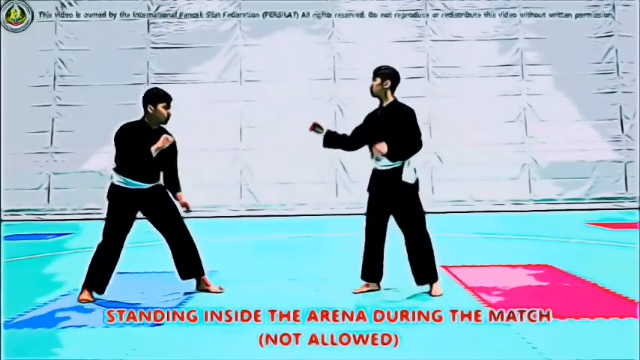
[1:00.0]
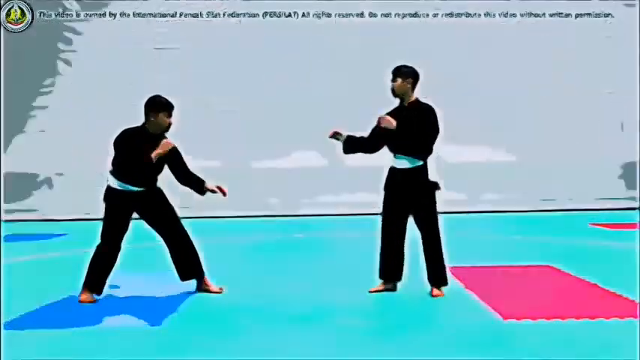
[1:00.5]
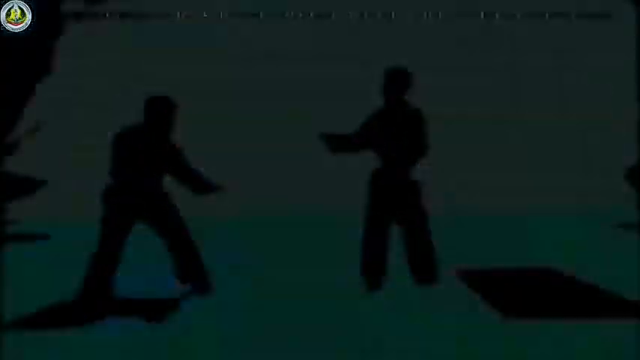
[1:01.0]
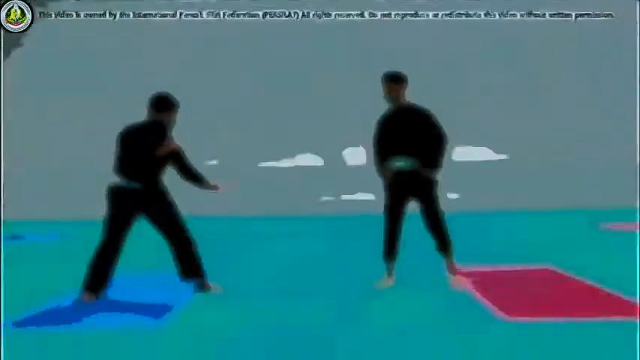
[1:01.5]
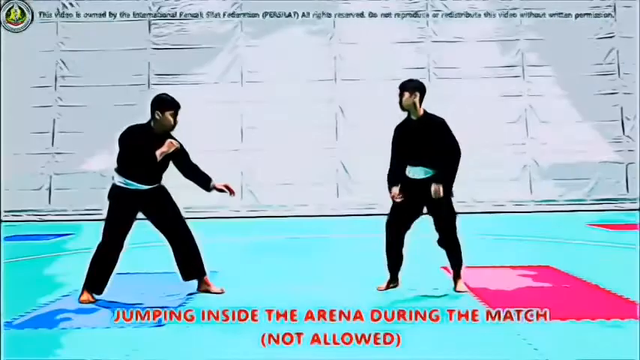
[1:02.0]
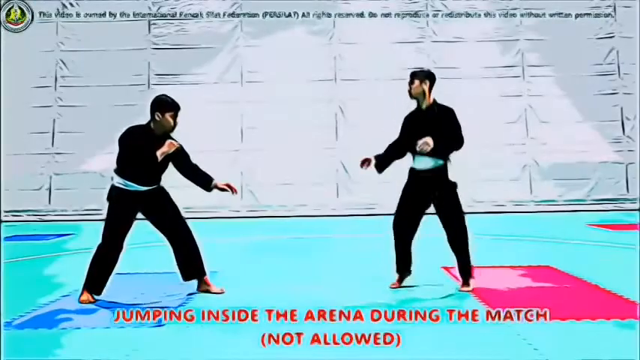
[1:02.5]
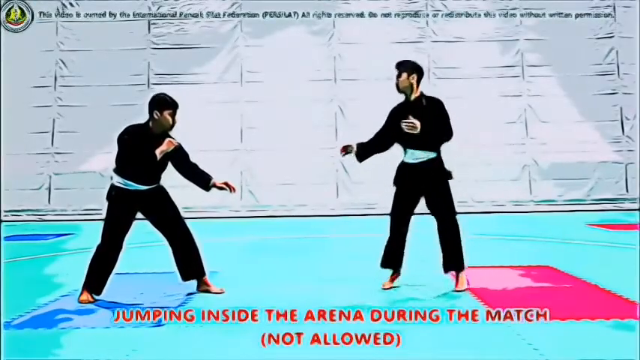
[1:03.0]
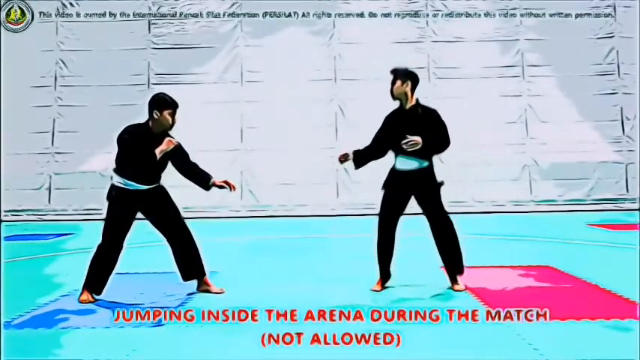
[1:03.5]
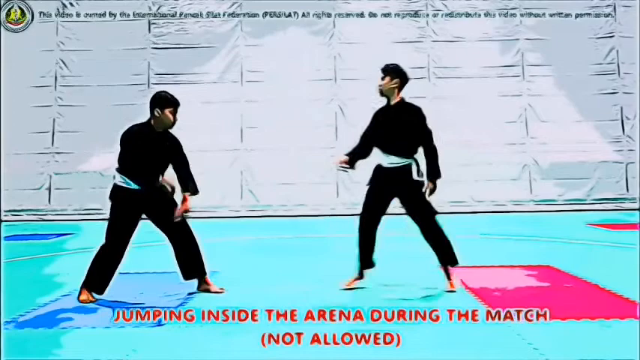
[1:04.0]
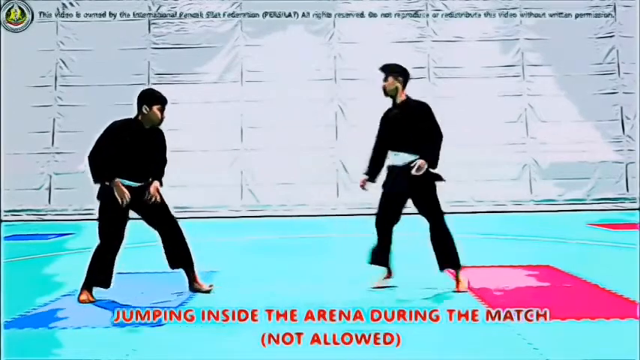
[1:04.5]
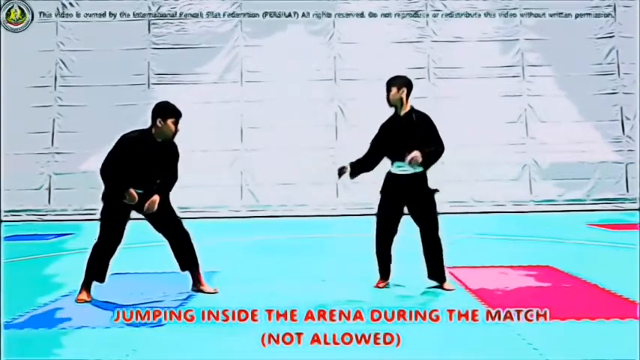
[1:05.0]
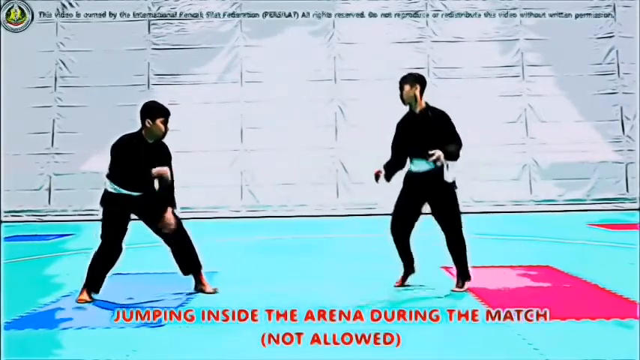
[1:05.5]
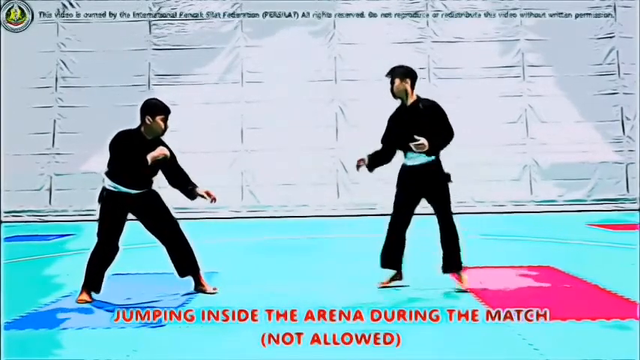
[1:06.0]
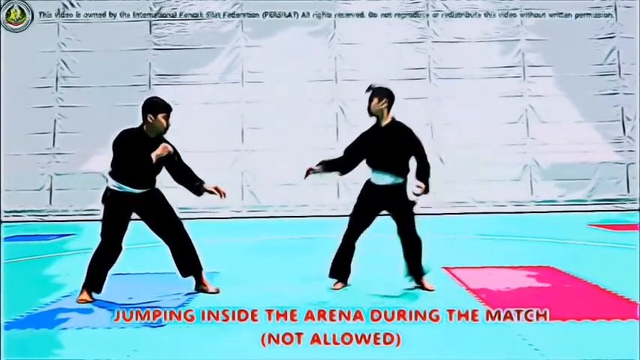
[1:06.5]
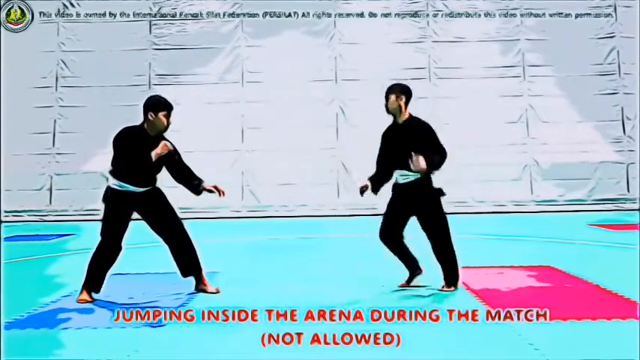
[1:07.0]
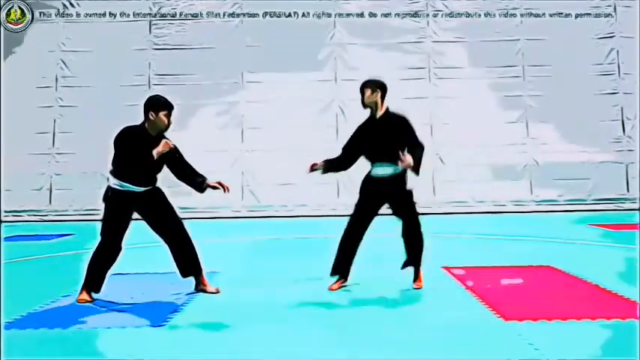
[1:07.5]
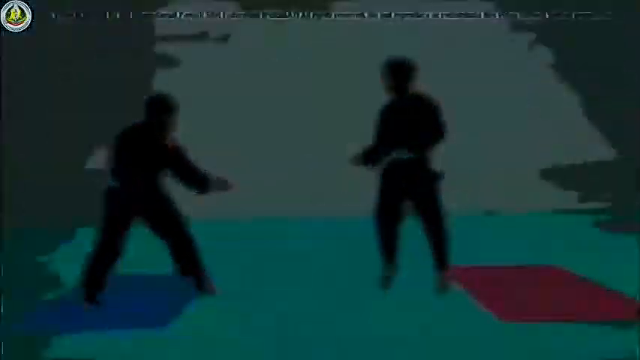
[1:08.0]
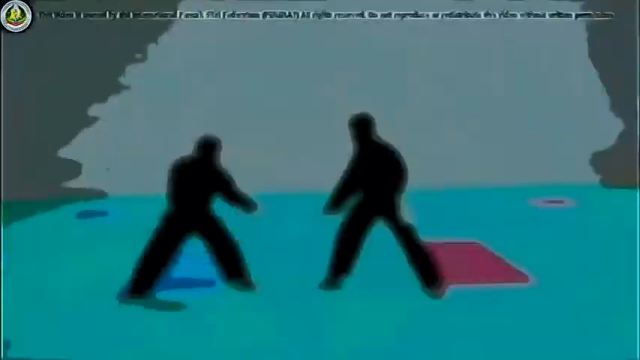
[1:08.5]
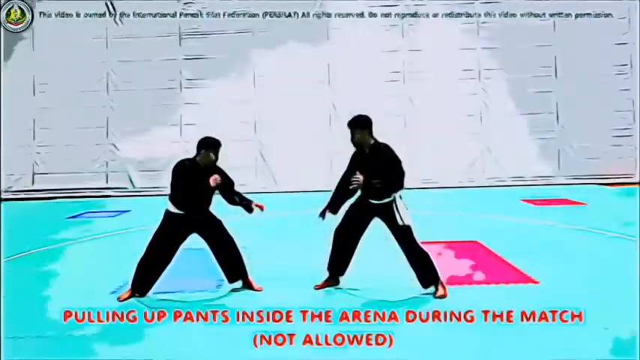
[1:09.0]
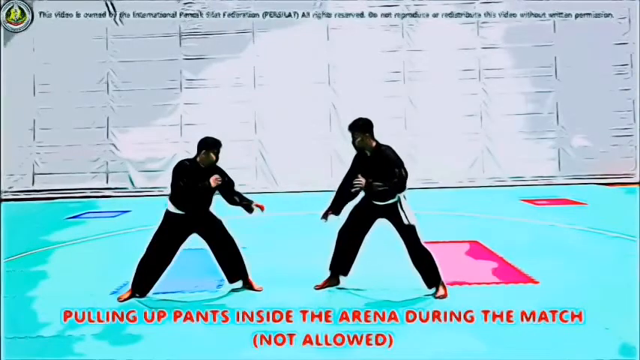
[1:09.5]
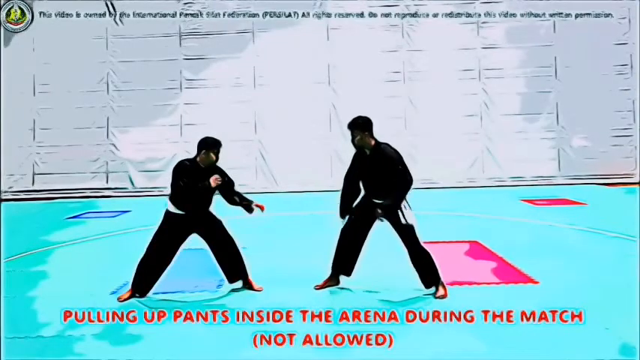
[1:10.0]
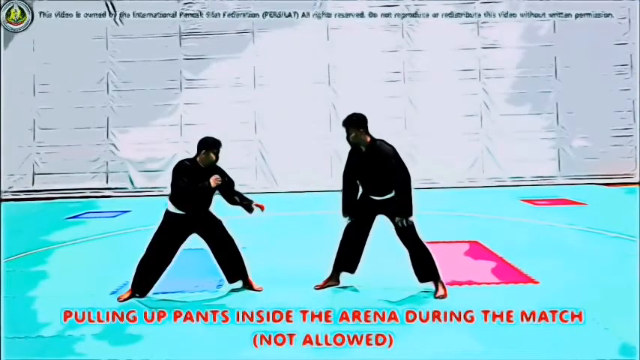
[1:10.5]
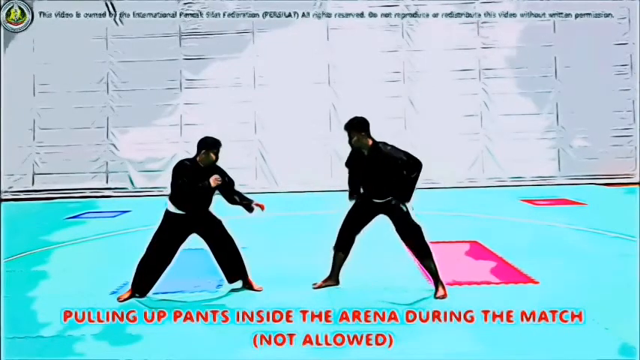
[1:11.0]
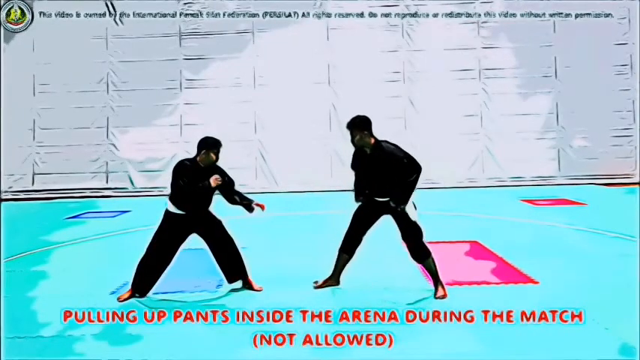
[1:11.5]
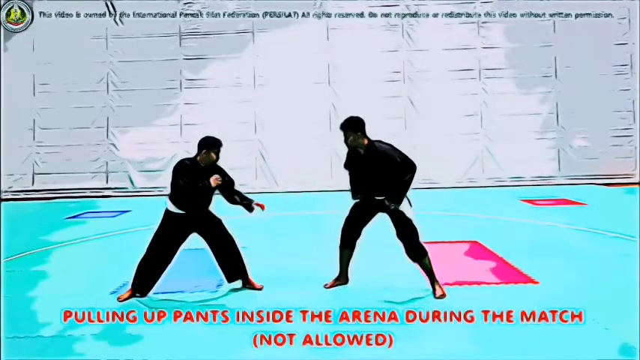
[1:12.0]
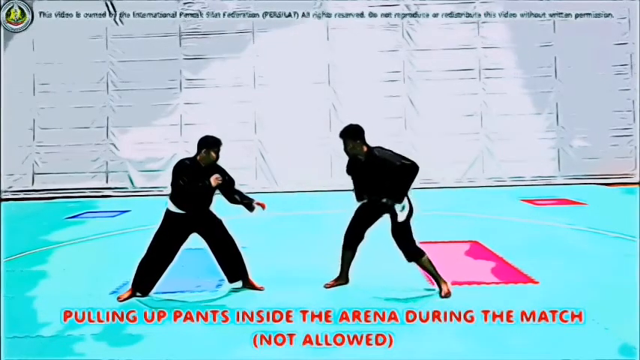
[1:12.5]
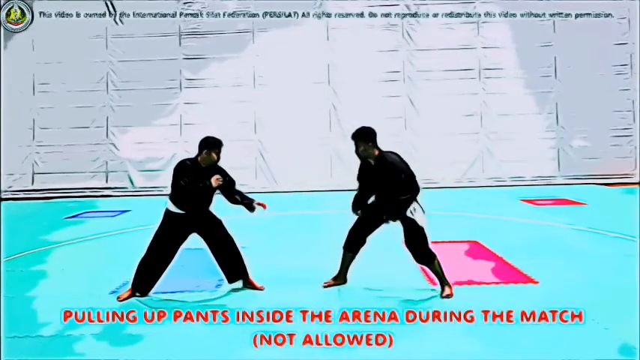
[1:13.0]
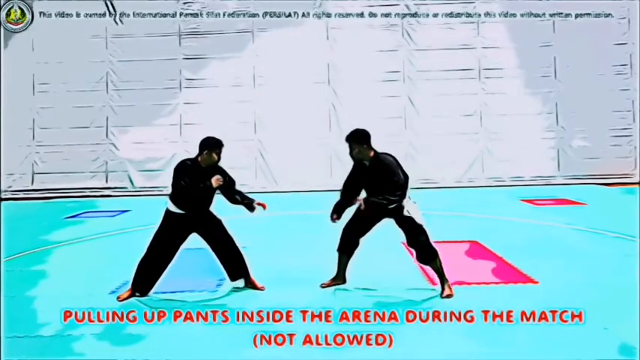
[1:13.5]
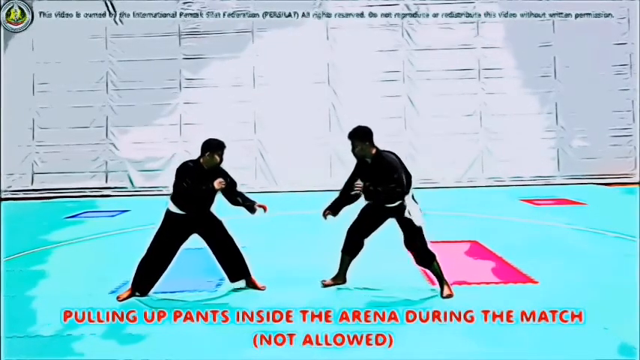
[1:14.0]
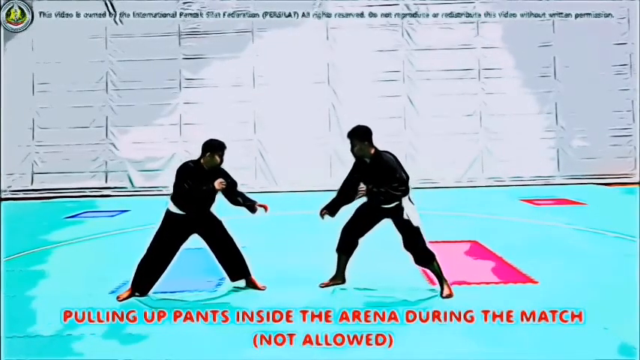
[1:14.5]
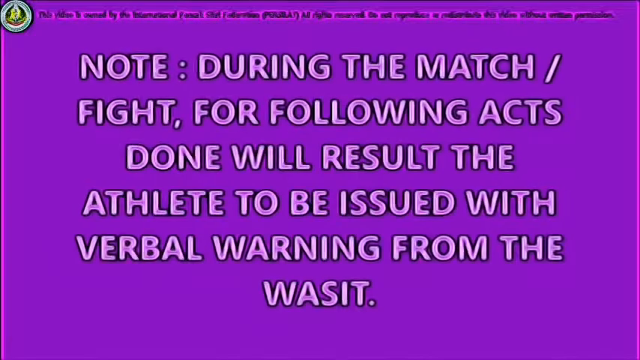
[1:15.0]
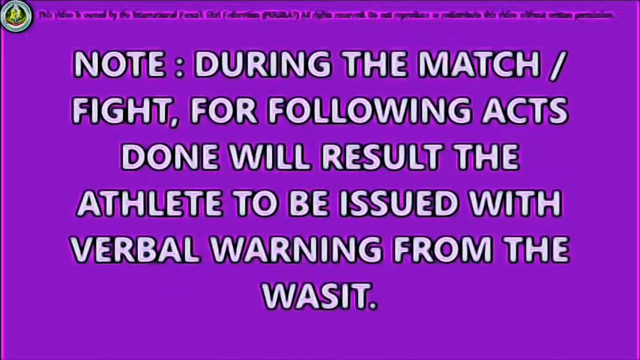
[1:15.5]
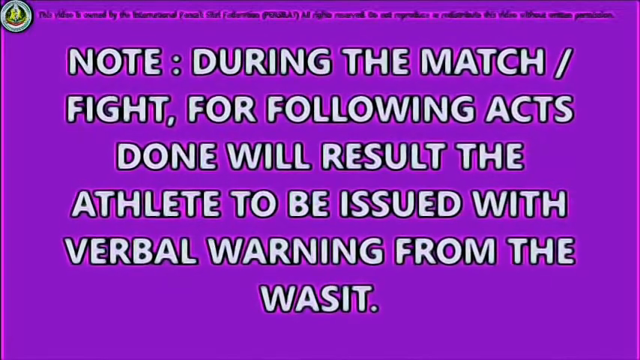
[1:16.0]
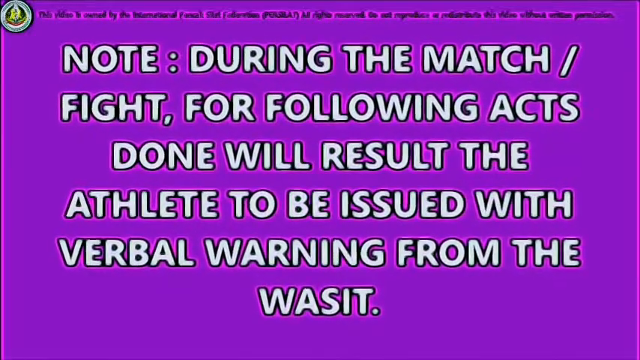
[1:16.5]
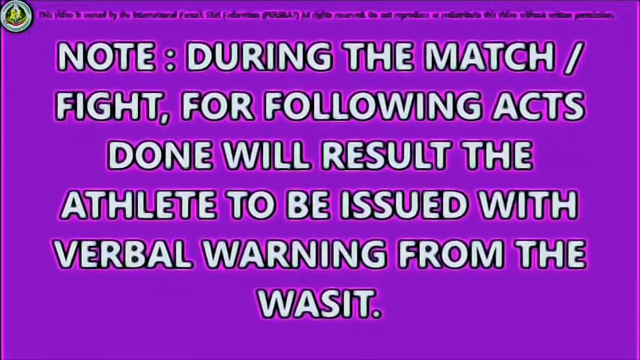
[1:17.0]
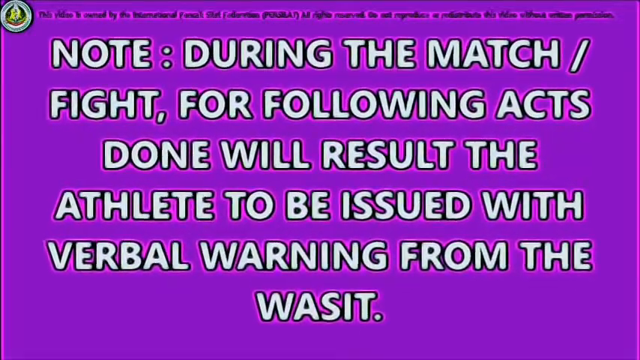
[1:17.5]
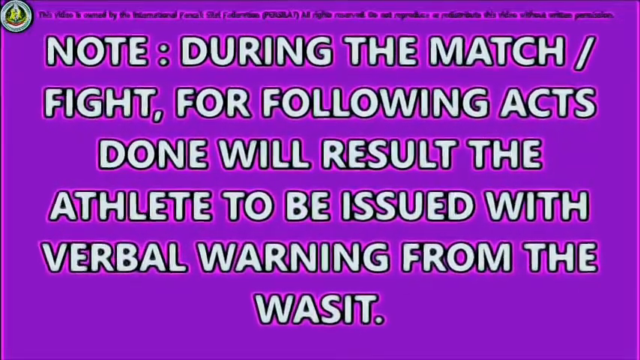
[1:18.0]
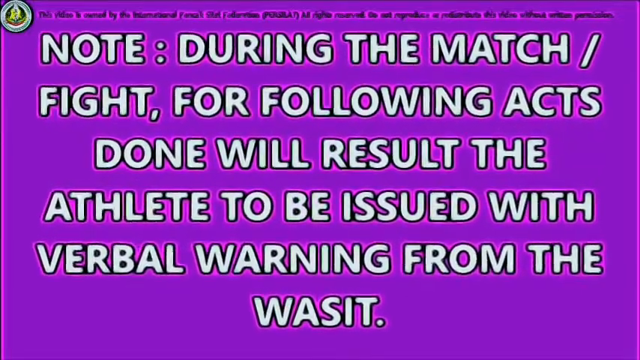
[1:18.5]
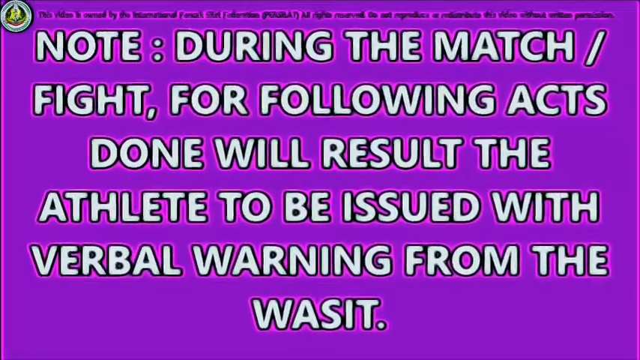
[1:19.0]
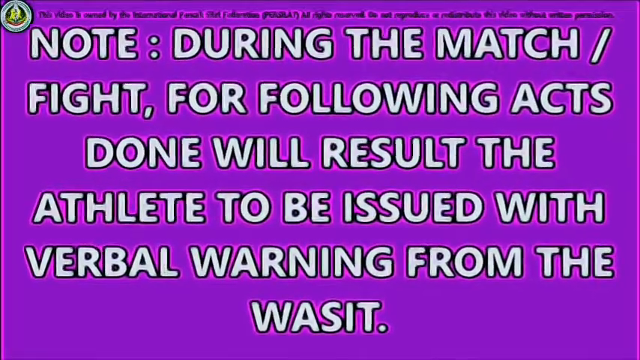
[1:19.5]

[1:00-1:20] The rules continue on screen: "jumping inside the arena during the match not allowed" and "pulling up pants inside the arena during the match not allowed", followed by a note that certain acts done during the match will result in the athlete being "issued with a verbal warning by the referee".